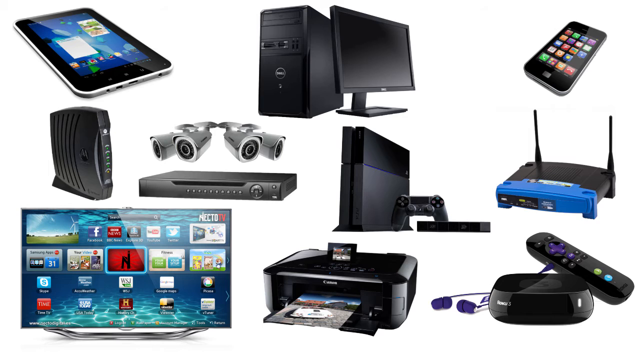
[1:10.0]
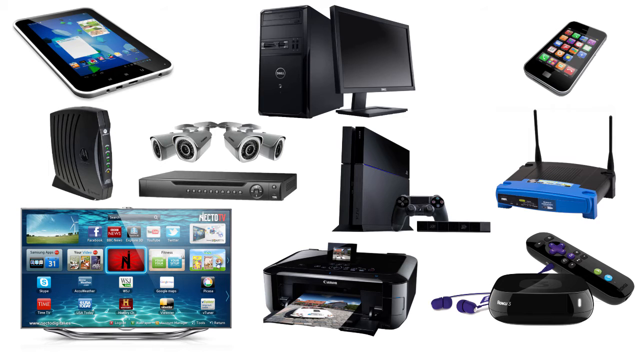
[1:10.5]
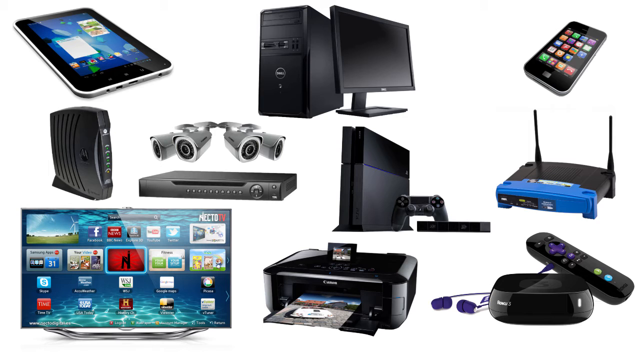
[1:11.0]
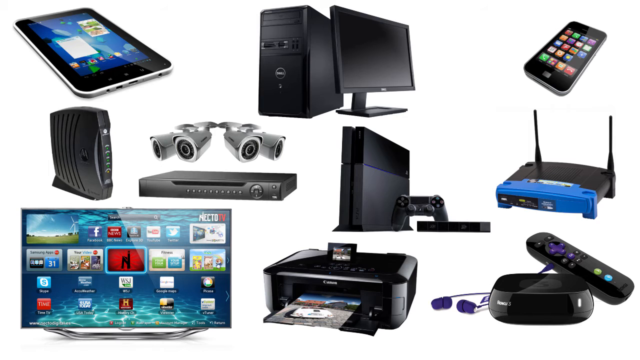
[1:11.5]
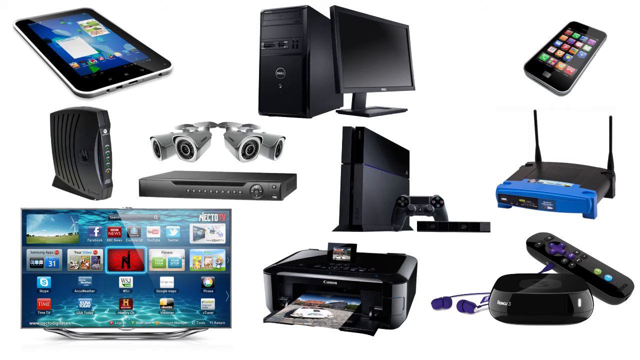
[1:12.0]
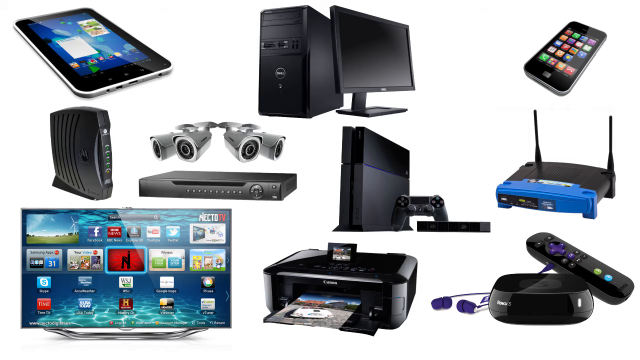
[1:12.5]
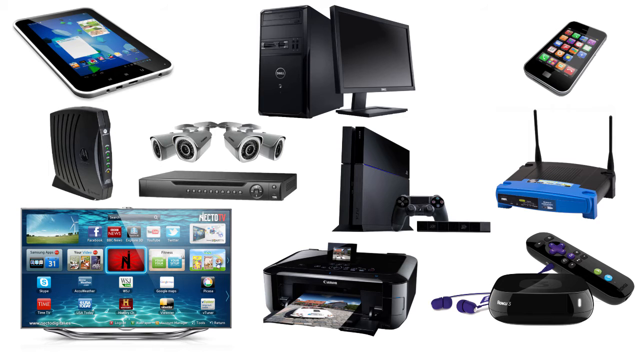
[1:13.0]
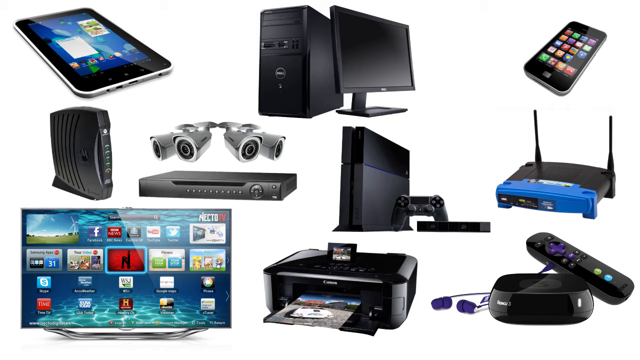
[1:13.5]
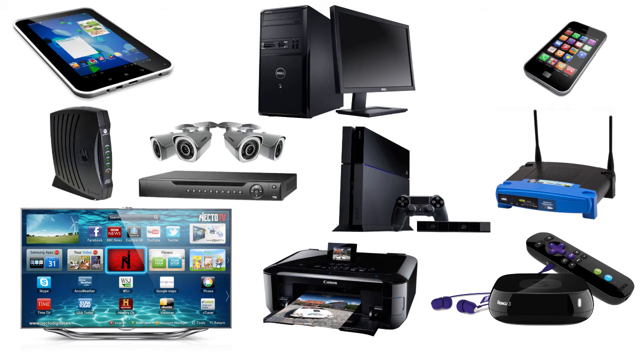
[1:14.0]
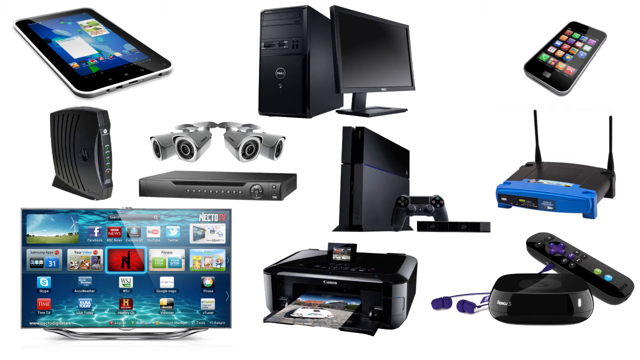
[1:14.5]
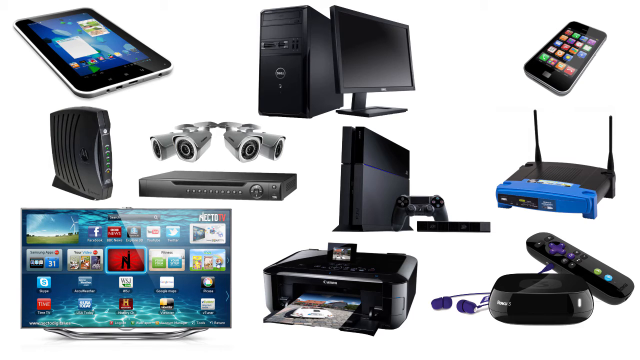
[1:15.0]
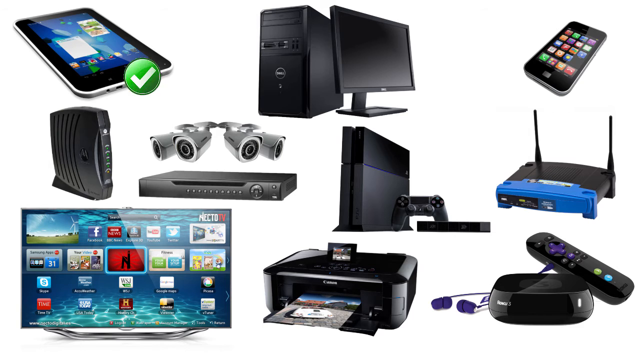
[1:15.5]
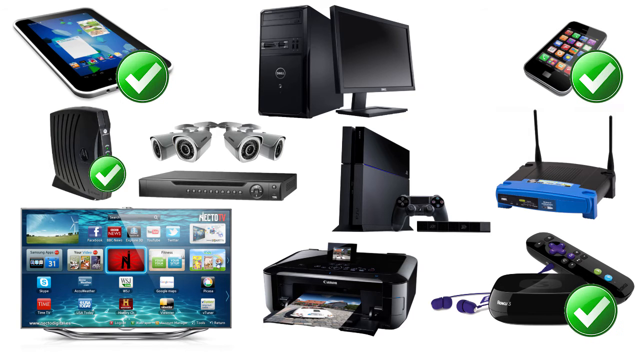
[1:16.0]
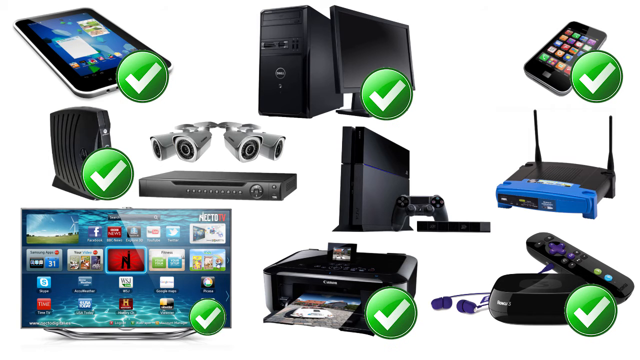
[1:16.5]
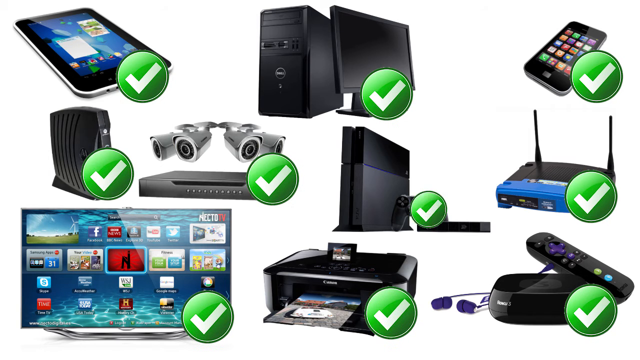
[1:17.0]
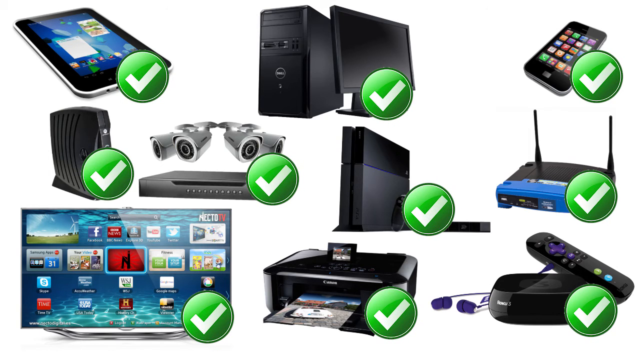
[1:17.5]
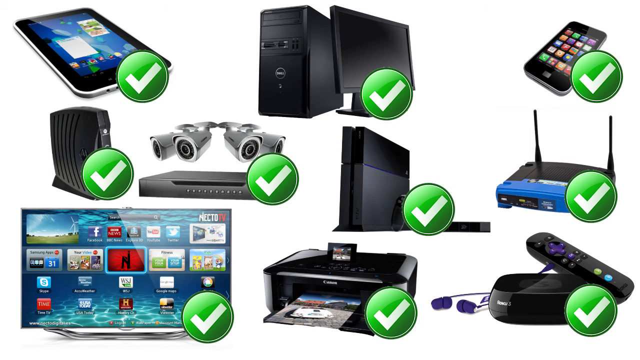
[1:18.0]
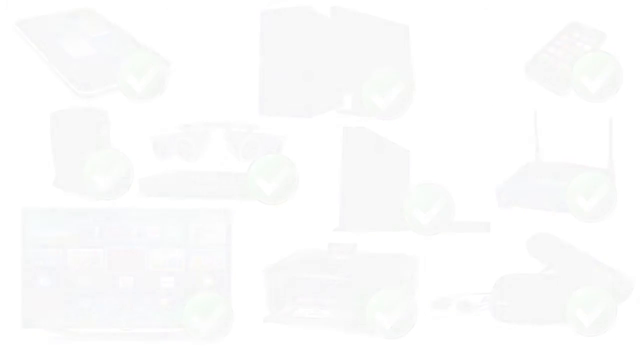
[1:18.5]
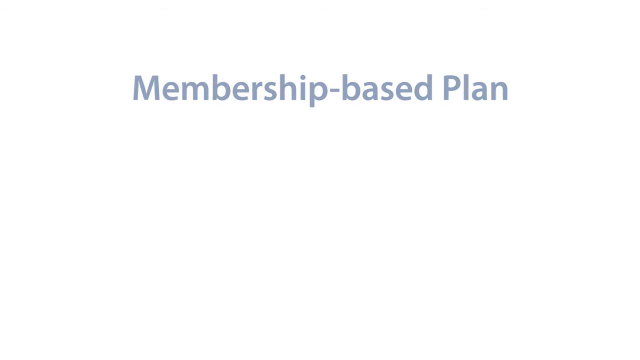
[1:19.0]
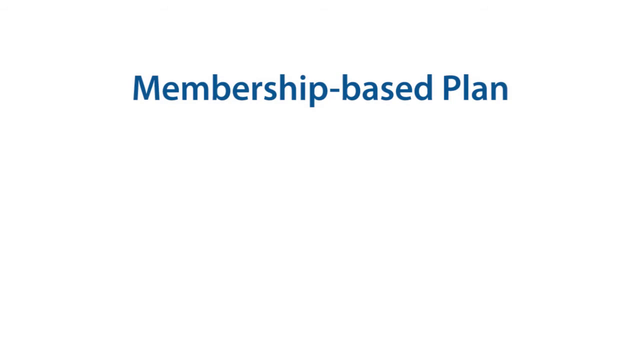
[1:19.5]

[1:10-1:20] The range of electronic devices is laid out on the white background in the same arrangement as before. A green circle with a white tick inside appears on top of the tablet at the top left. Similar graphics then appear on the iPhone in the top right, the remote control and headphones in the bottom right, the router on the left, the printer at the bottom, the computer in the top middle, the TV in the bottom left, the router on the right, the lights and DVD recorder, and the PlayStation, until every item has a green circle with a white tick on it. The scene fades to white, and blue text fades in at the top of the screen saying "Membership-based plan".